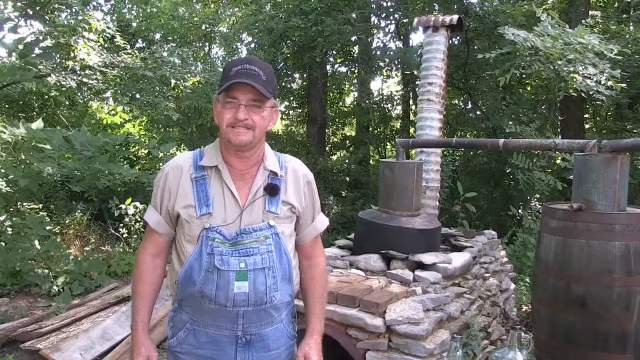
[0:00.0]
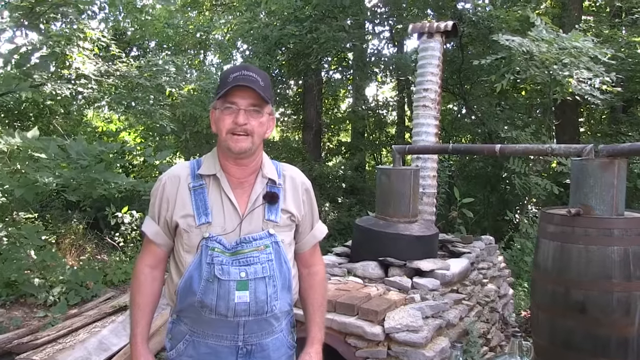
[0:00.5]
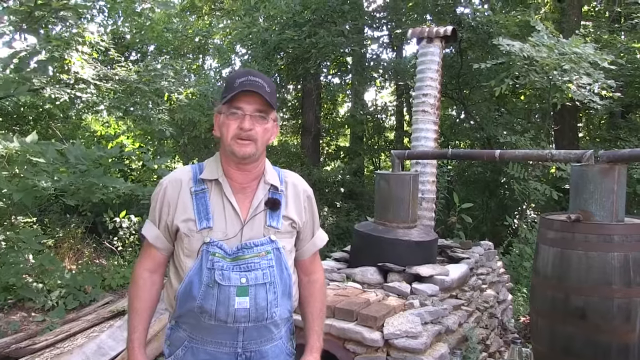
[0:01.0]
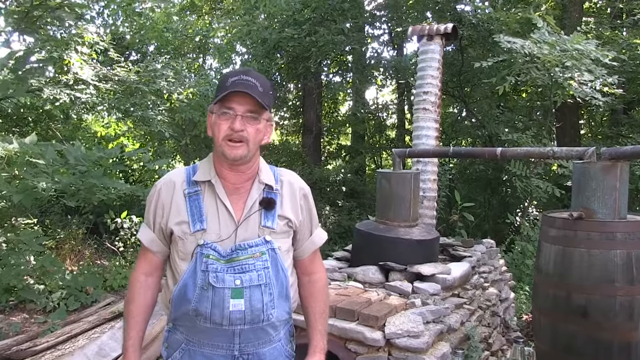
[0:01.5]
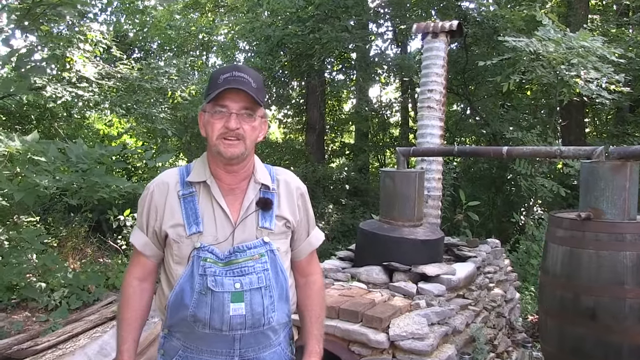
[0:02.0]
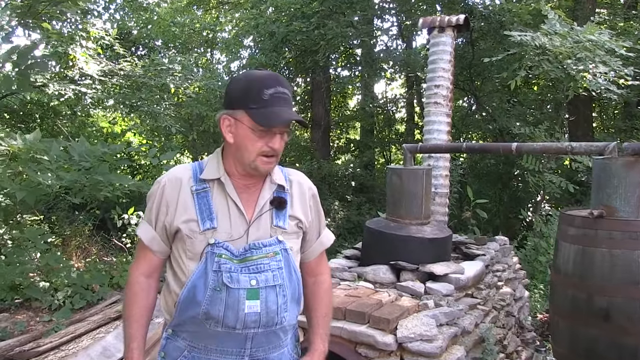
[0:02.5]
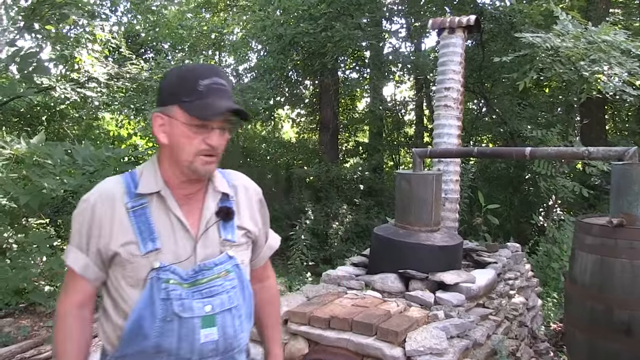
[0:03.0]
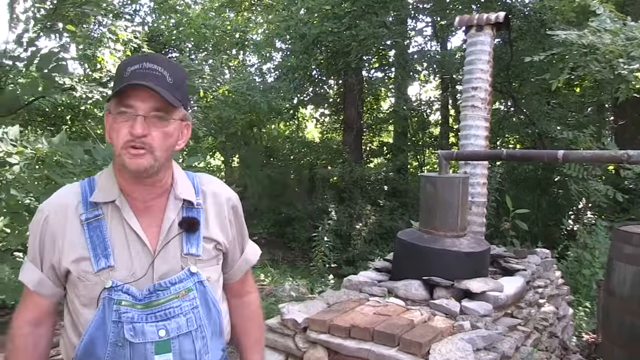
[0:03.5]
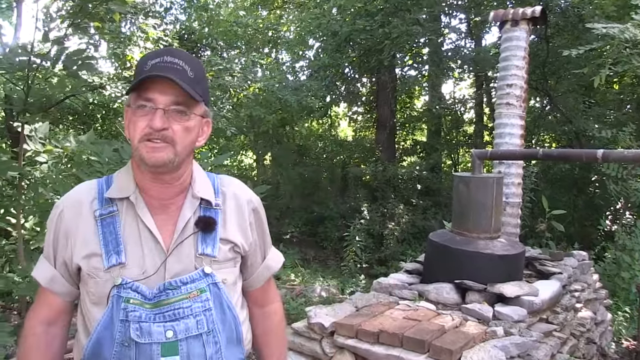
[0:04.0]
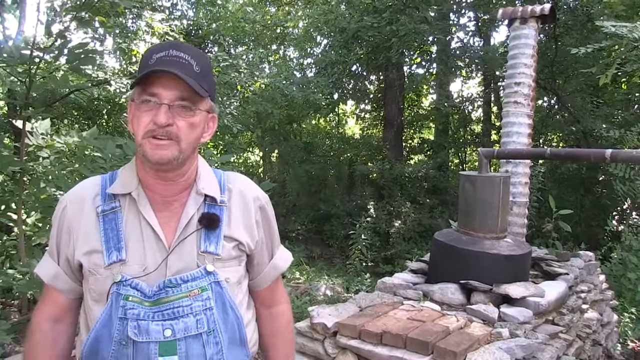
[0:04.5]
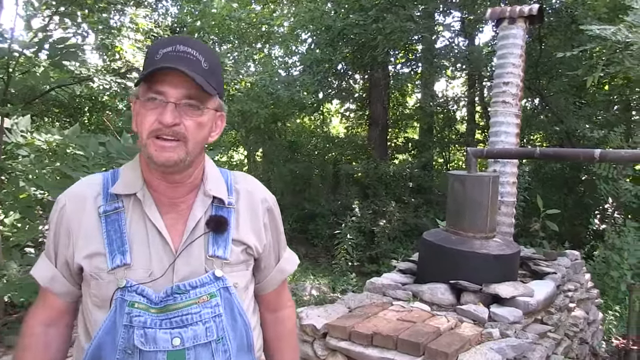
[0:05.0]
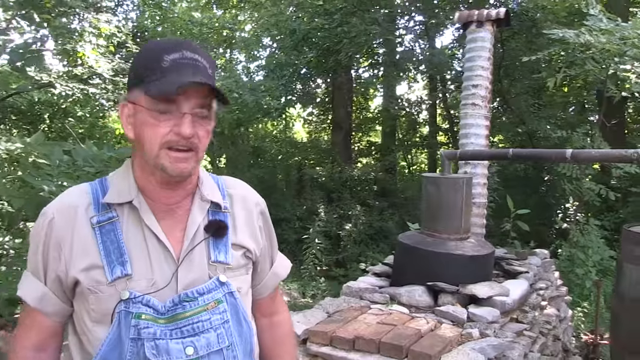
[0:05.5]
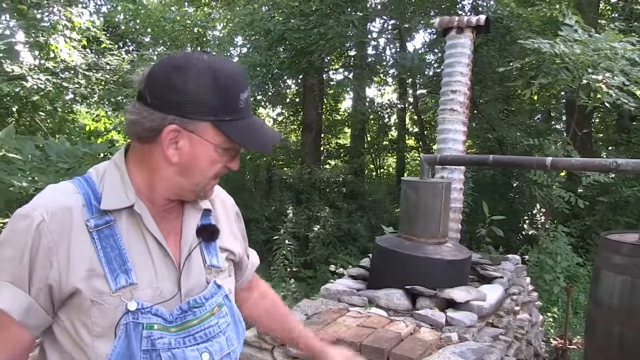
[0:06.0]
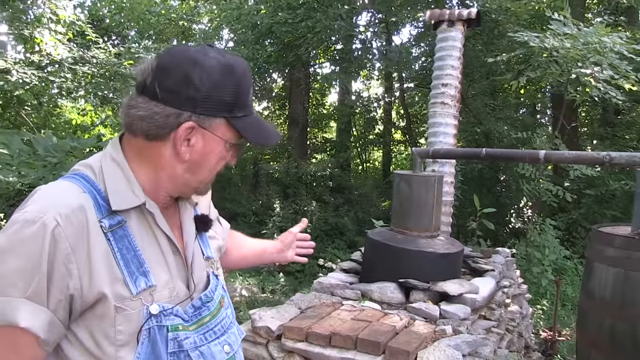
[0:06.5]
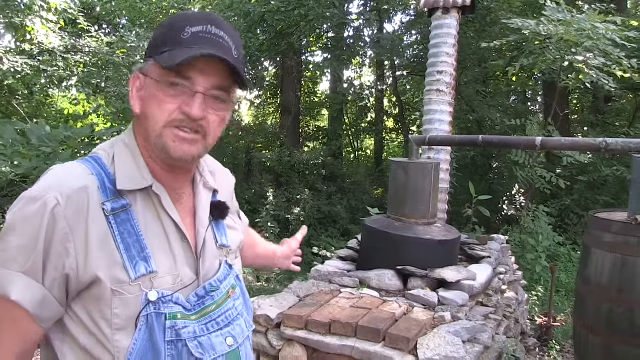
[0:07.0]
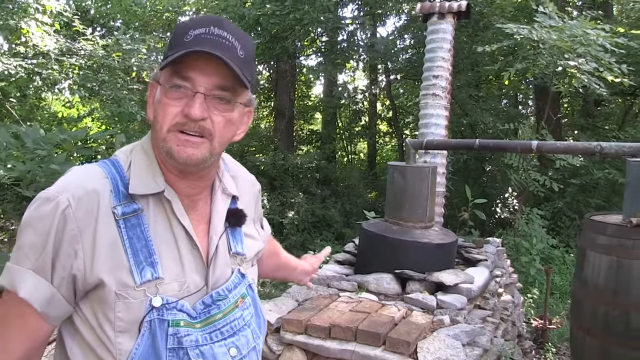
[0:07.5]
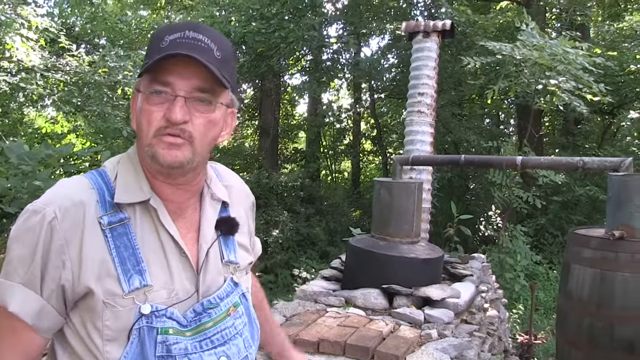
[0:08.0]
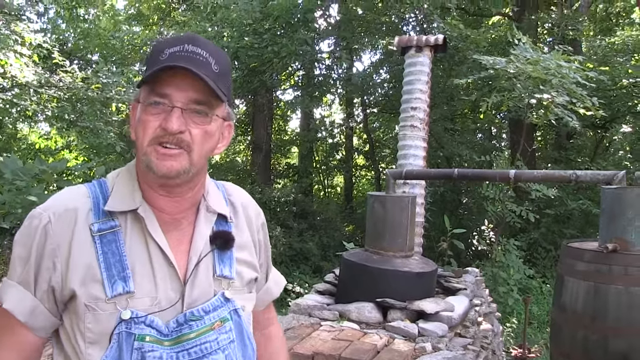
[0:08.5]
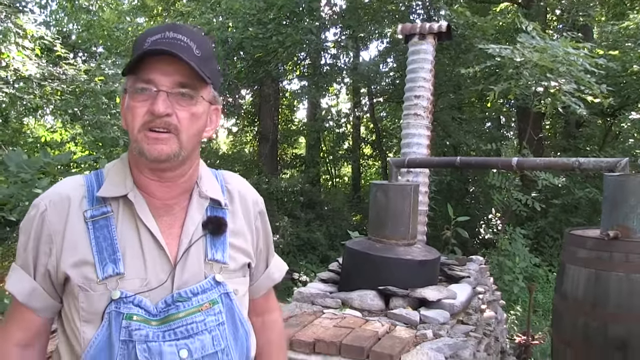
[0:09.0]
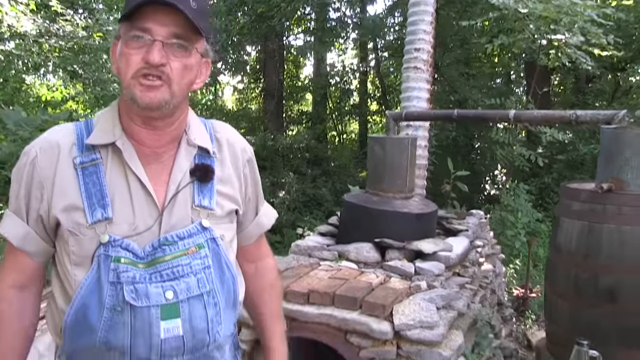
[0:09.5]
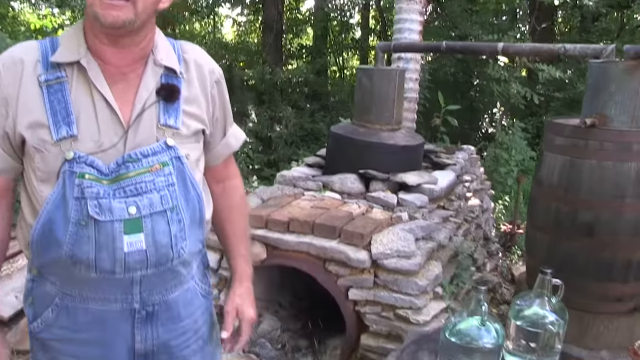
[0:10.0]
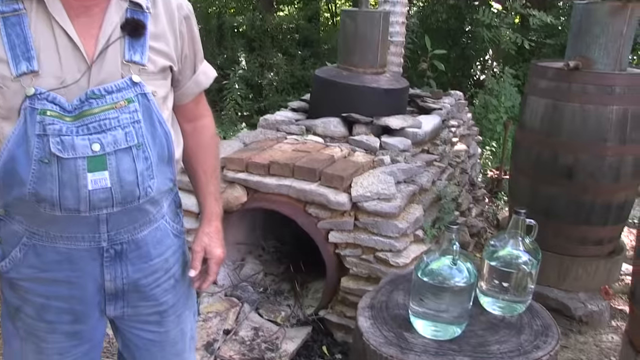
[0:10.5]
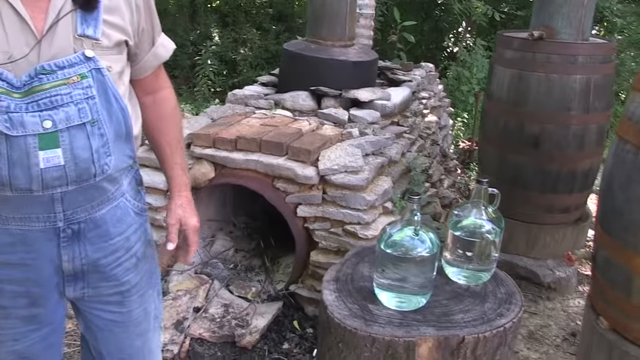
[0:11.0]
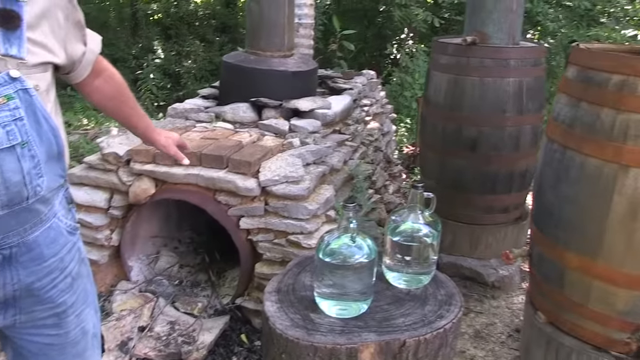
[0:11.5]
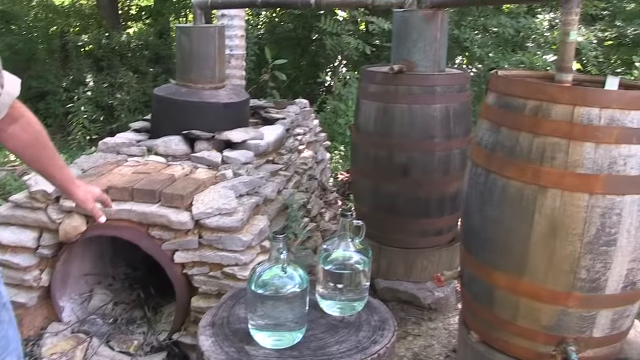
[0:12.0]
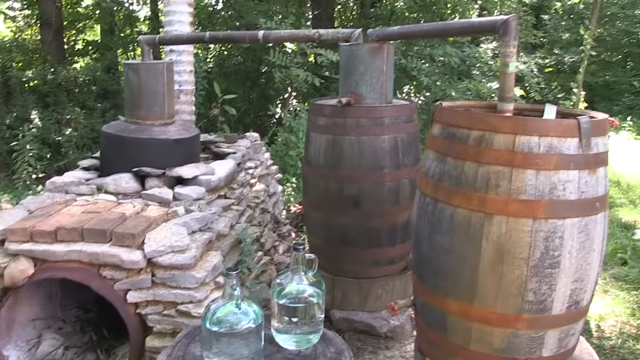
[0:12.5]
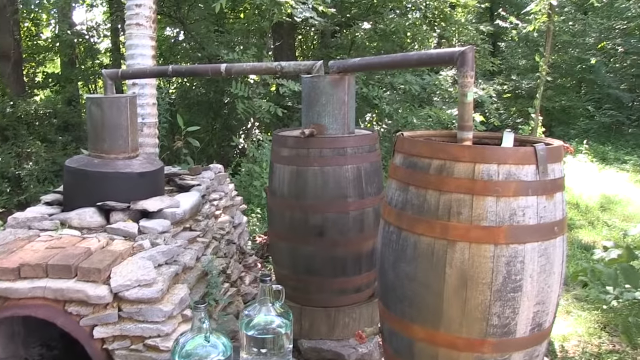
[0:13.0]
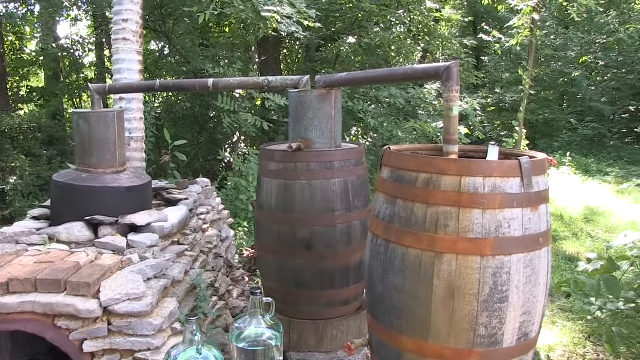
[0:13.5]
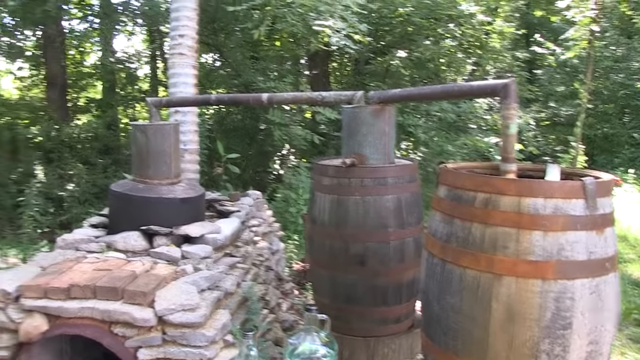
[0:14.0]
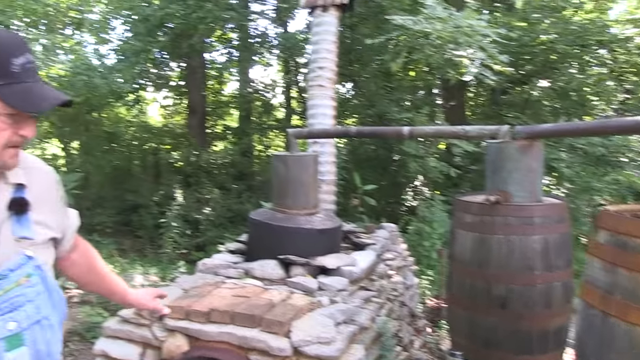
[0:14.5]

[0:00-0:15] An elderly man appears to be explaining to the camera how the stove behind him works. The stove looks like a sort of hybrid of a stone stove and a machine. He seems clearly experienced with how it works and could presumably be its creator. He wears glasses, a black hat and overalls with a collared shirt, kind of like how a plumber might dress; he has a mustache and is probably a bit on the overweight side. They are out in the open, in nature, with the stove.